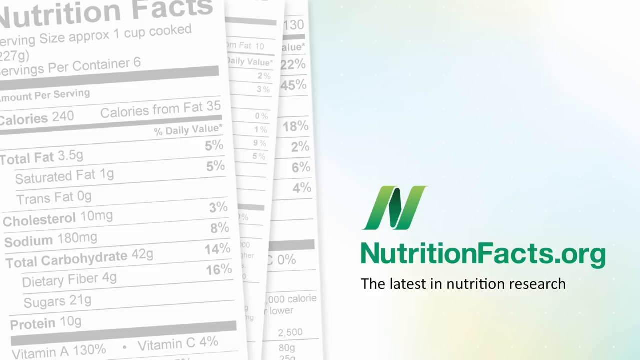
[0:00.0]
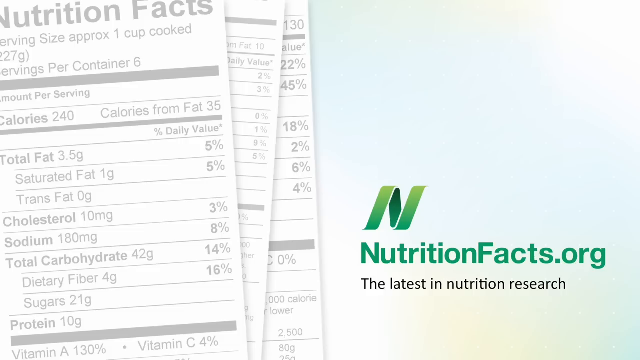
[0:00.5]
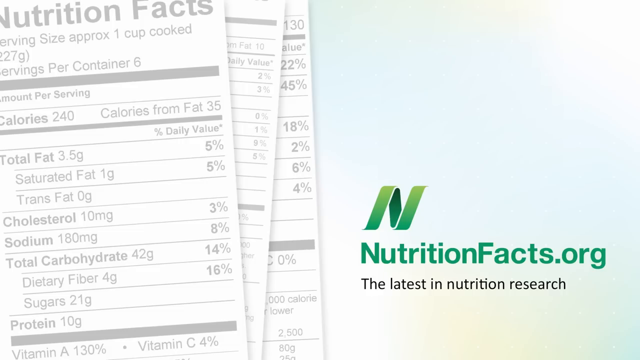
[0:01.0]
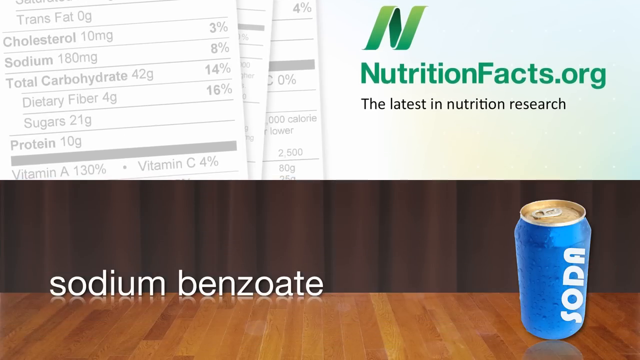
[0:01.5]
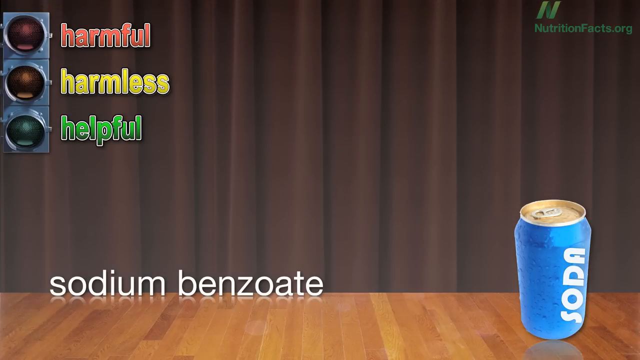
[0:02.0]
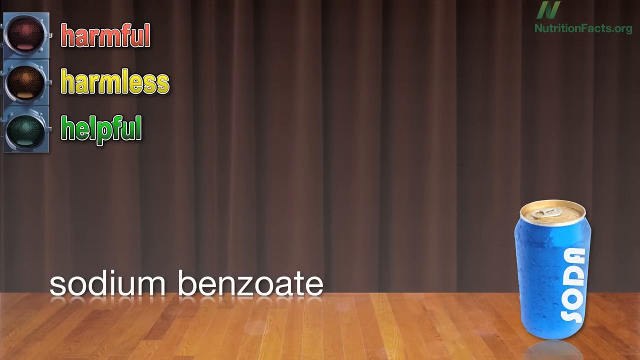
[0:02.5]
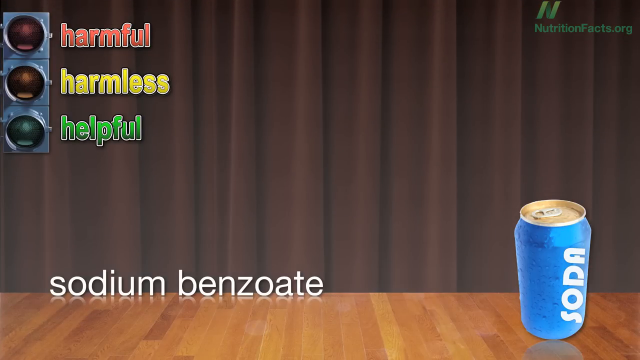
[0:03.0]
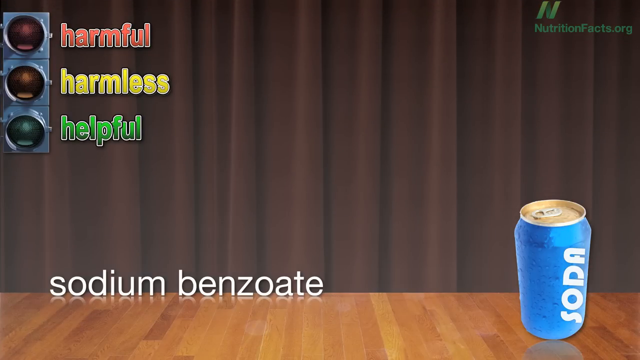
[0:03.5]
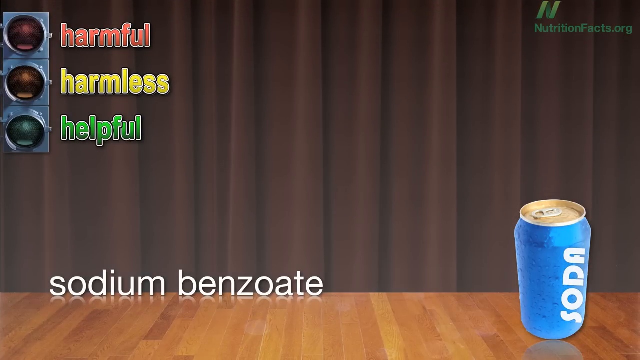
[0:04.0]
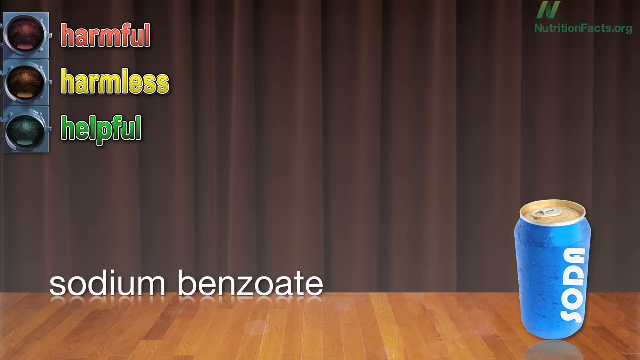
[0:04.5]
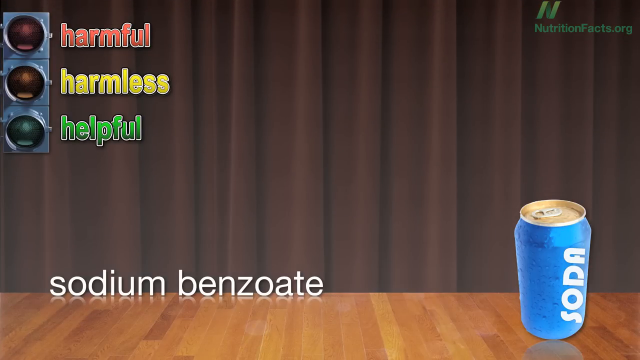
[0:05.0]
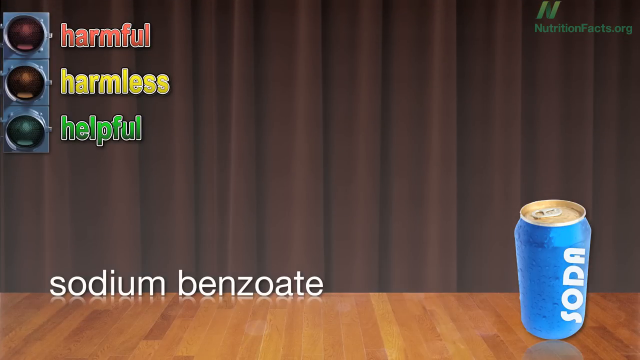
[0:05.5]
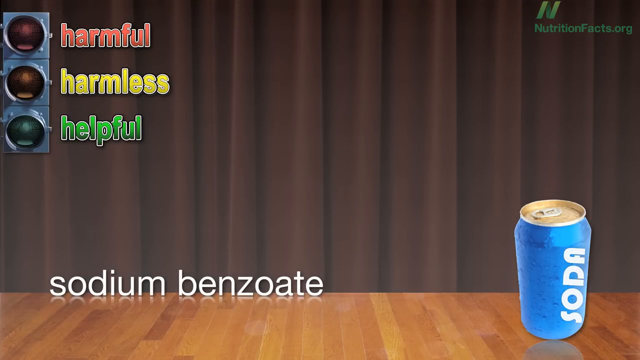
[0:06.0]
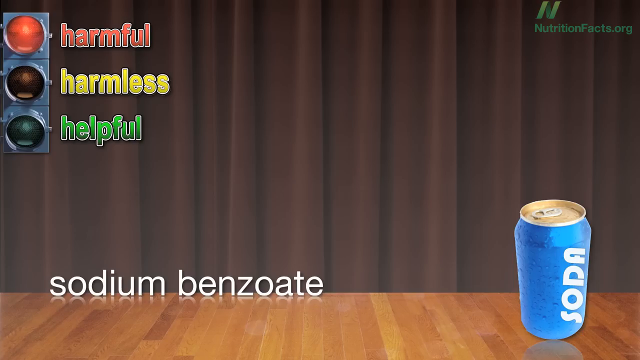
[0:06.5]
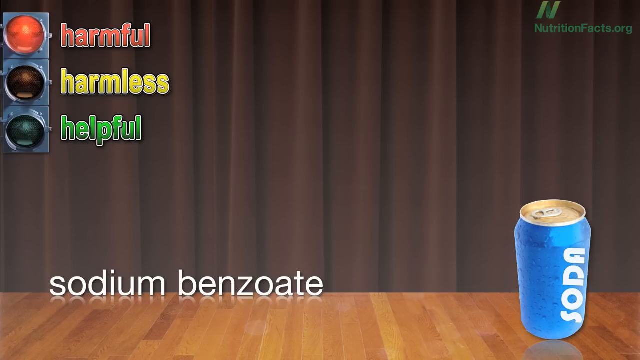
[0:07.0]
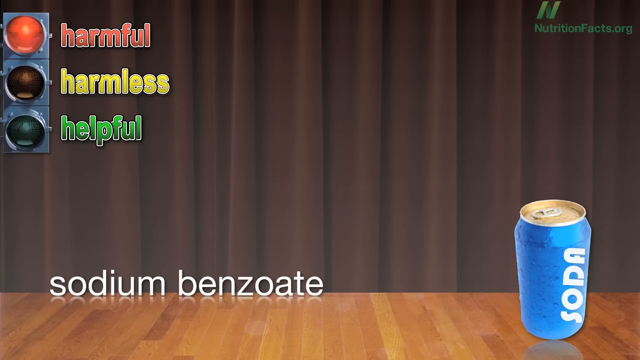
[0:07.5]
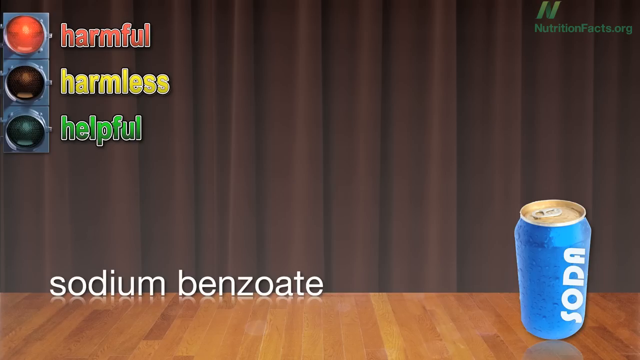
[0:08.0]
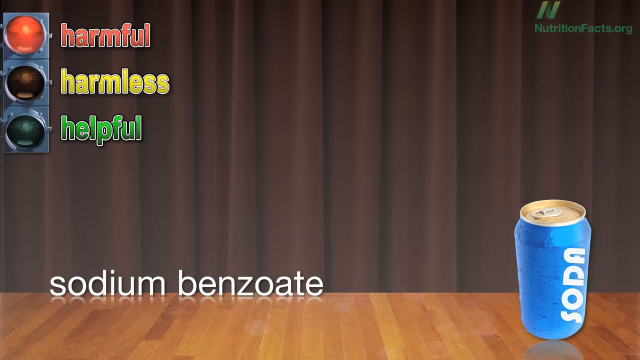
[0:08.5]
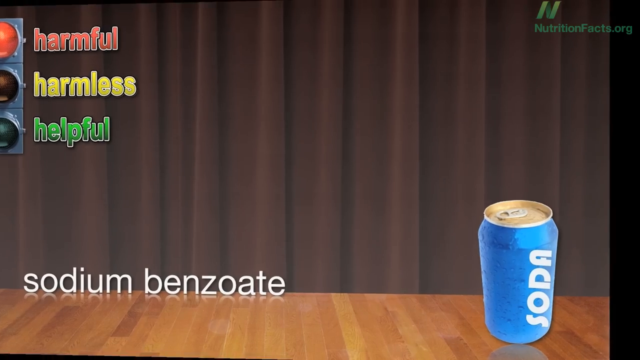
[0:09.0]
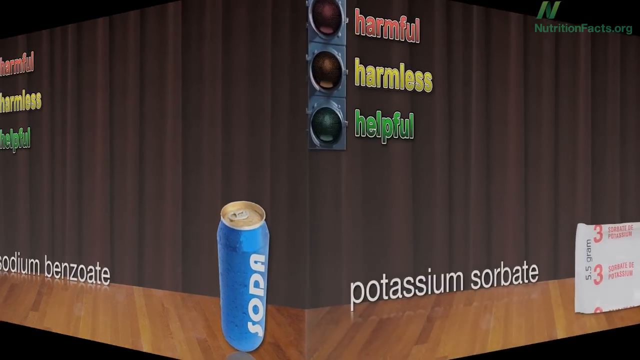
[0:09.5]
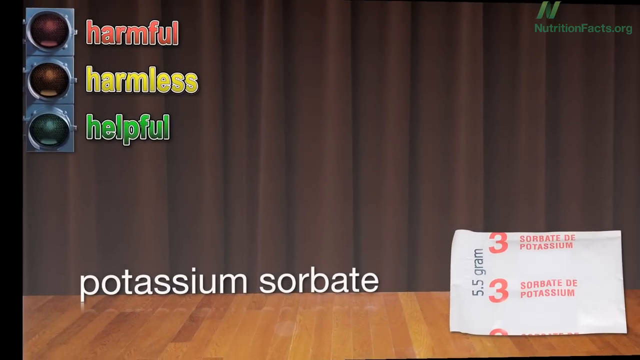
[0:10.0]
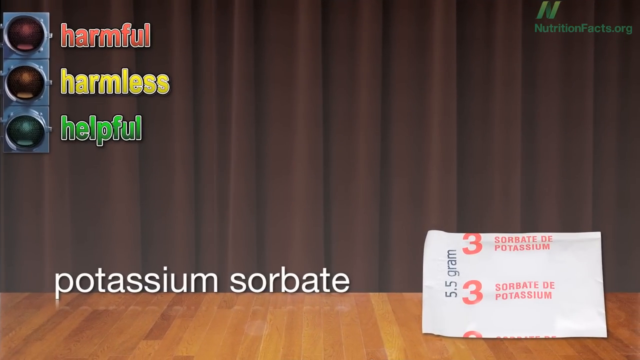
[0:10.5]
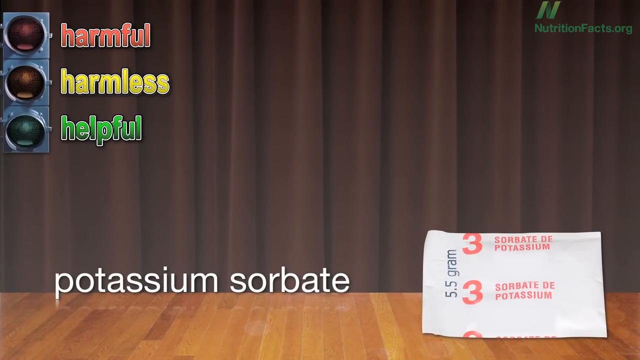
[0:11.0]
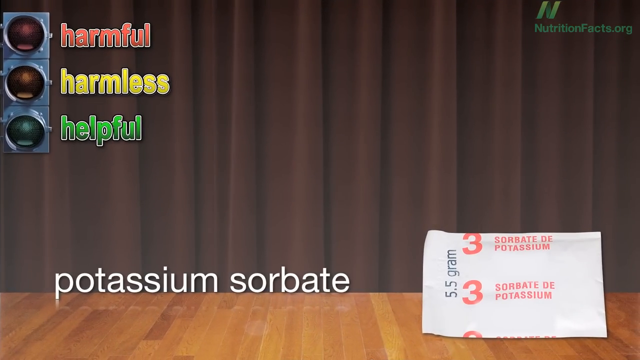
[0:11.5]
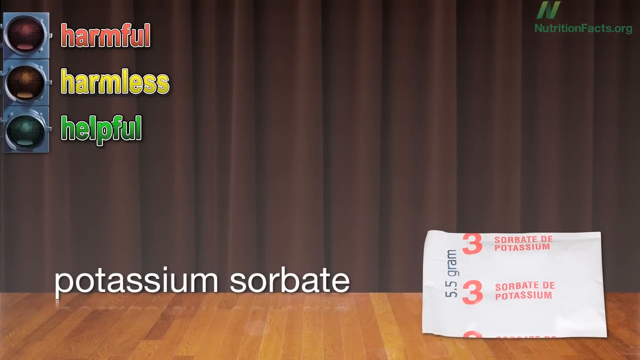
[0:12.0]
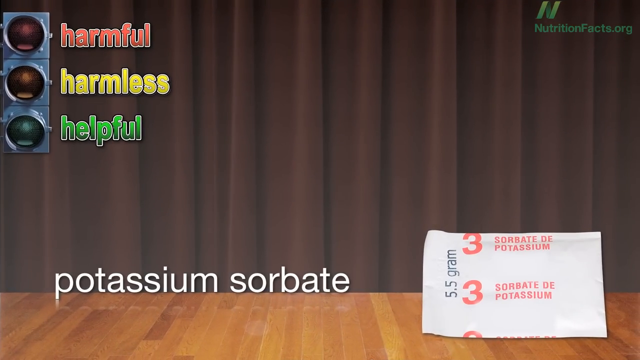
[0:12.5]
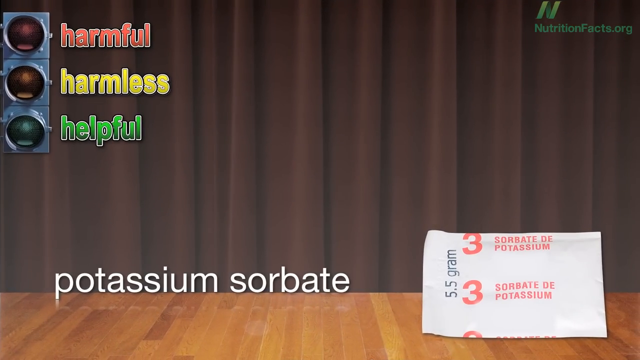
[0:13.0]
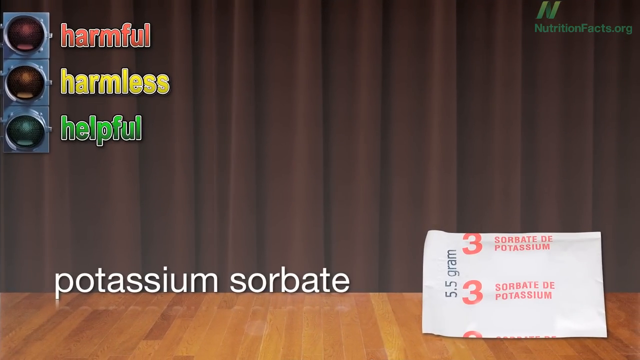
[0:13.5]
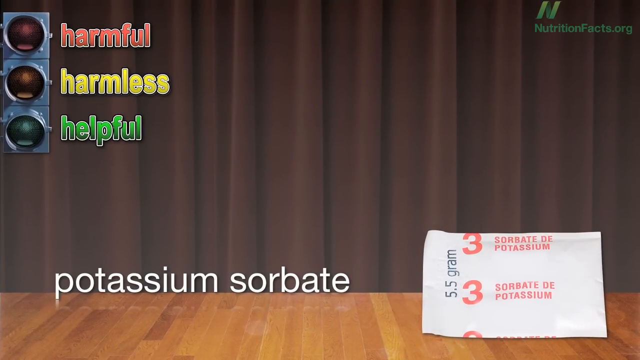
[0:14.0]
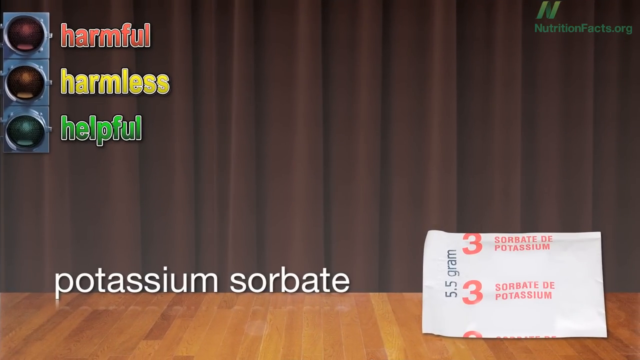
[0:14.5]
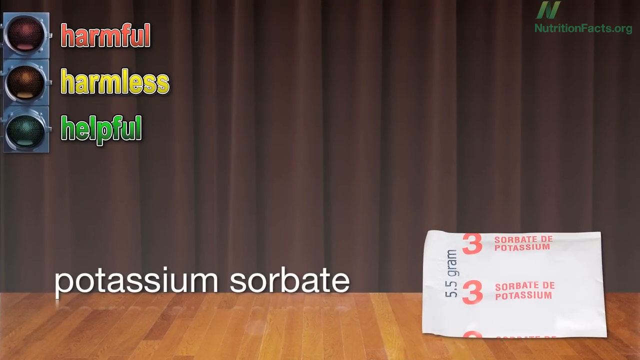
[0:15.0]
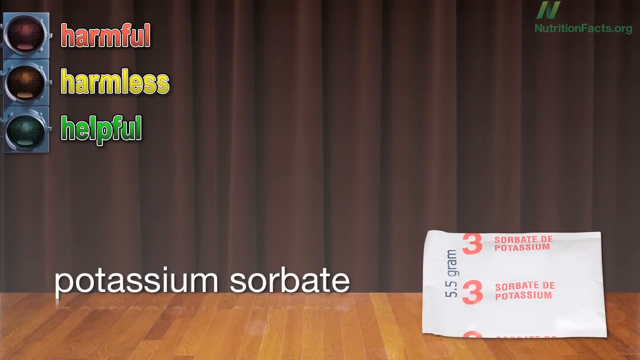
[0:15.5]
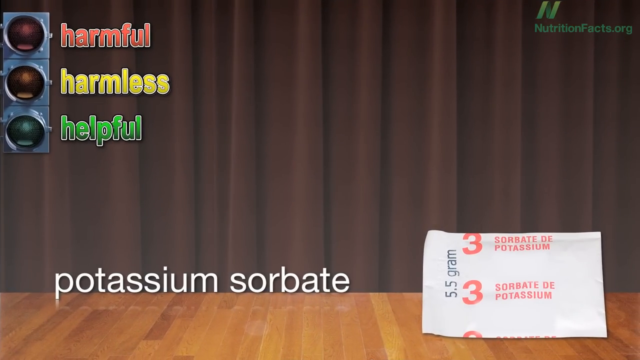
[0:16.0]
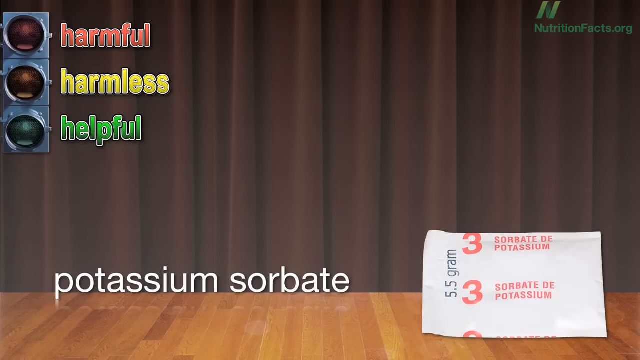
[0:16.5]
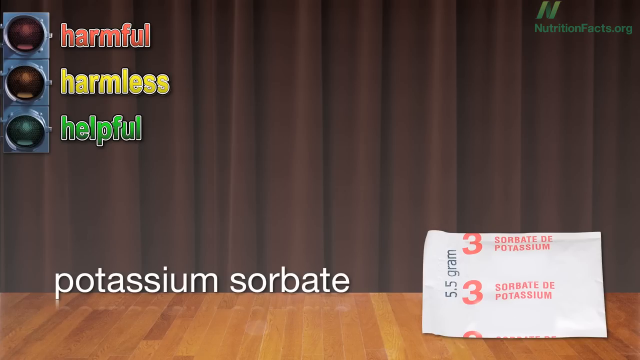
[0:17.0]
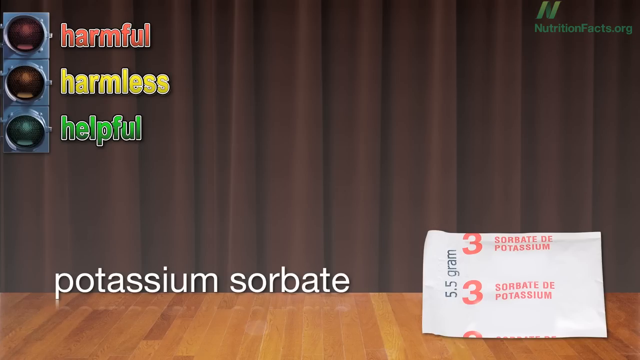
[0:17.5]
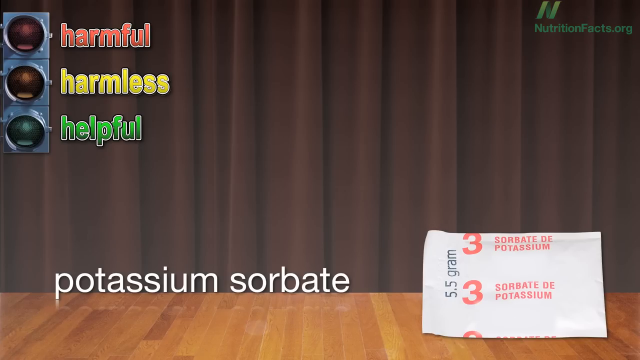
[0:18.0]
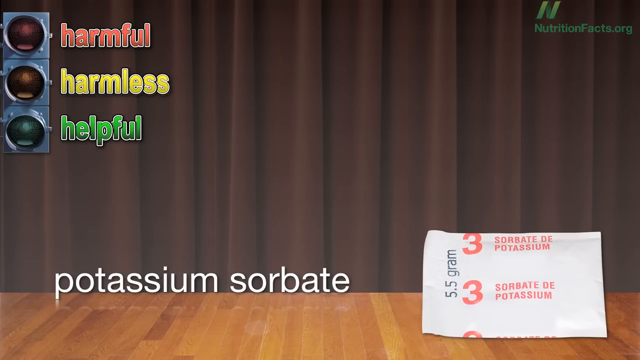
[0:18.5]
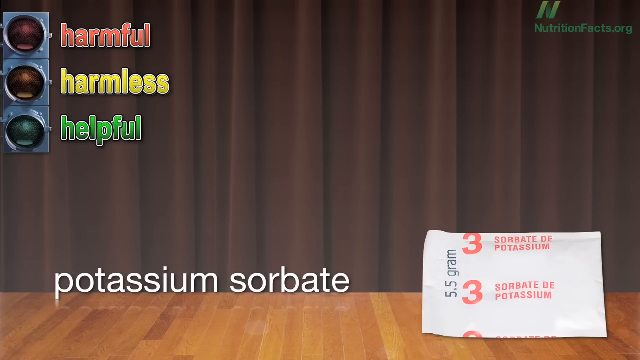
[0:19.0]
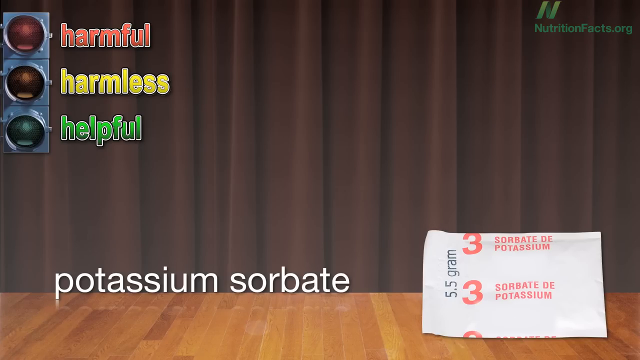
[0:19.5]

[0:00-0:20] A logo for a company called nutritionfacts.org appears: a green N in the form of a curled-up ribbon, with the text "the latest in nutrition research". The ingredients in several recipes or products are shown. The view scrolls upwards to the first ingredient, sodium benzoate, shown with a can of soda against a pleated curtain background. In the top left is a traffic light system that says "harmful" in red, "harmless" in yellow and "helpful" in green. After a moment, the red "harmful" light lights up. The screen then turns like a cube revolving to the left by 90 degrees, and the next product is potassium sorbate, or sorbate of potassium. The same harmful, harmless or helpful traffic light system appears, and this time potassium sorbate is also shown as harmful, getting the red light.